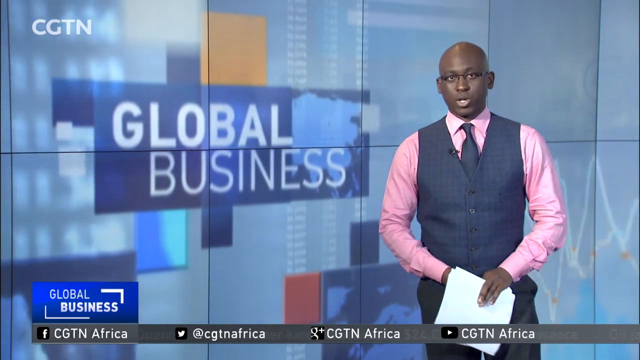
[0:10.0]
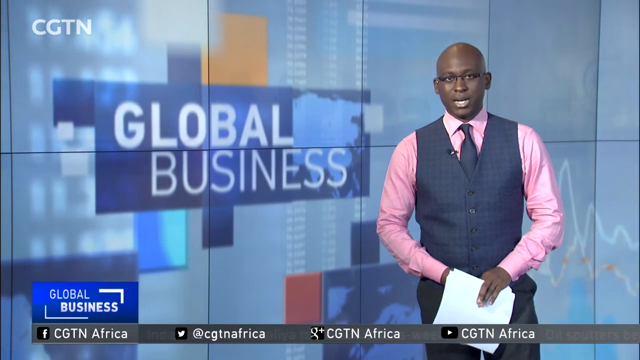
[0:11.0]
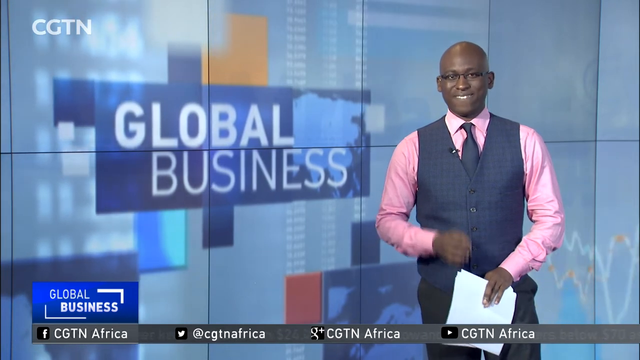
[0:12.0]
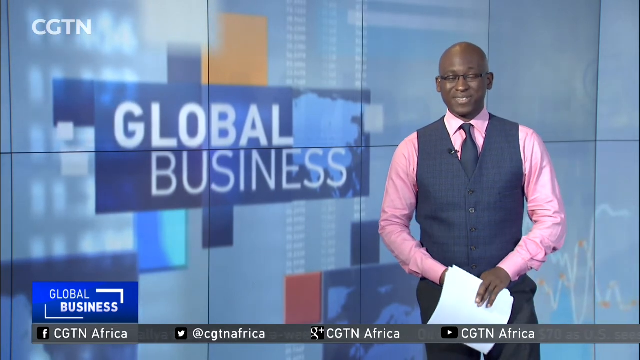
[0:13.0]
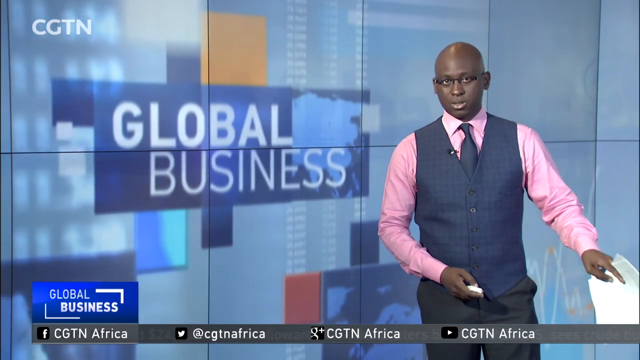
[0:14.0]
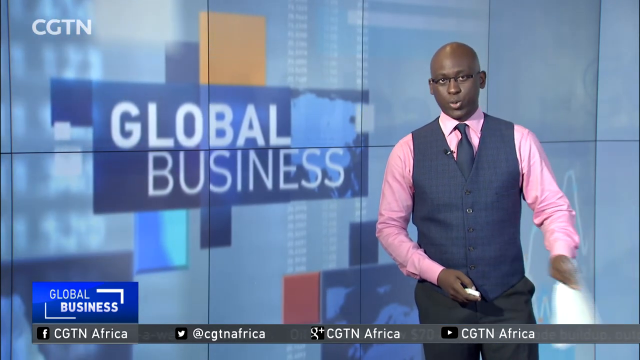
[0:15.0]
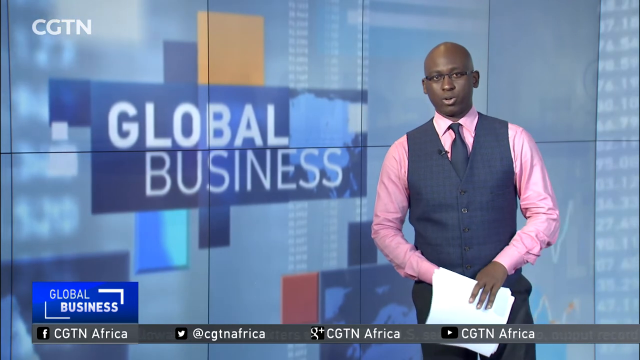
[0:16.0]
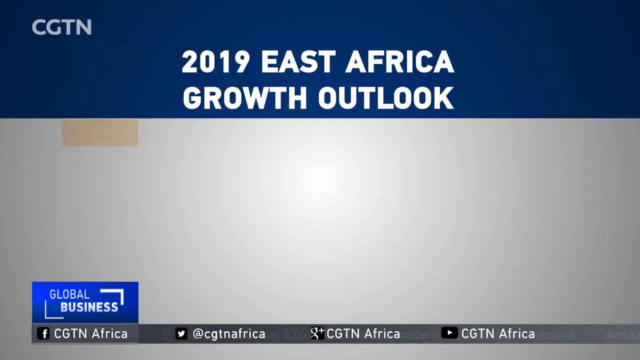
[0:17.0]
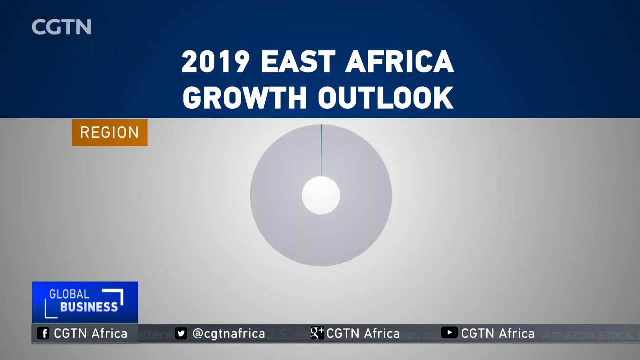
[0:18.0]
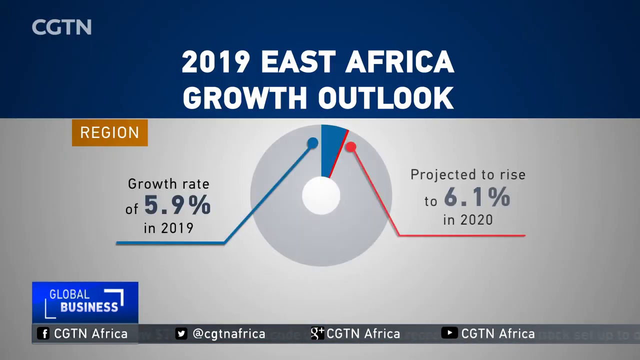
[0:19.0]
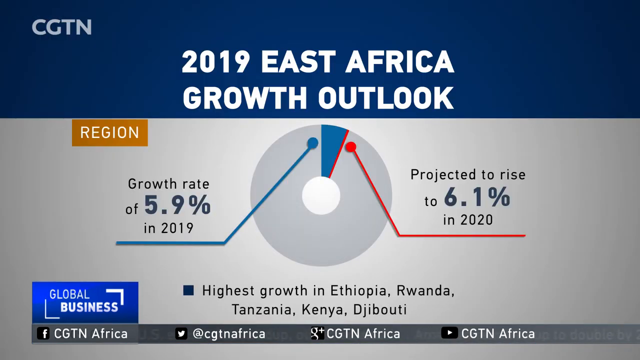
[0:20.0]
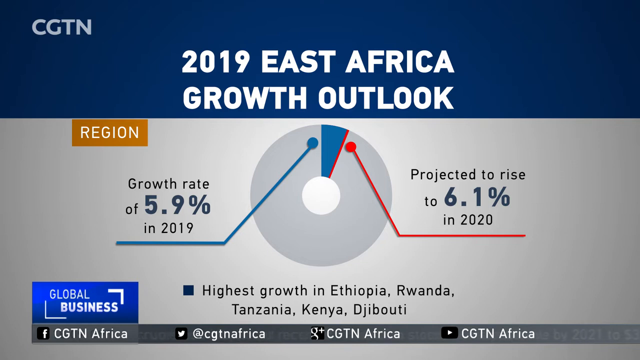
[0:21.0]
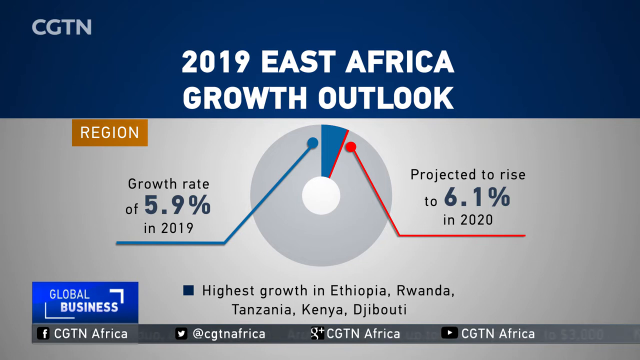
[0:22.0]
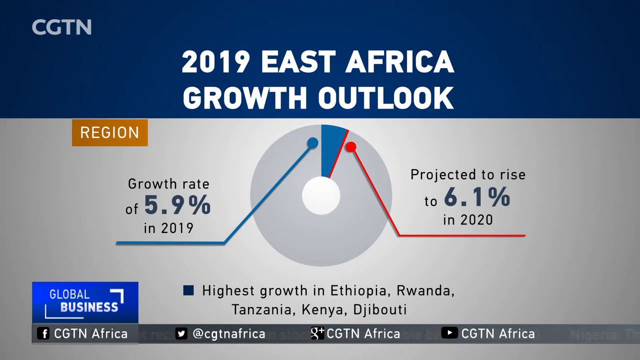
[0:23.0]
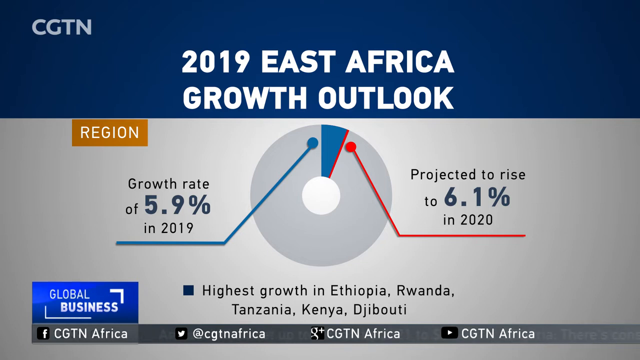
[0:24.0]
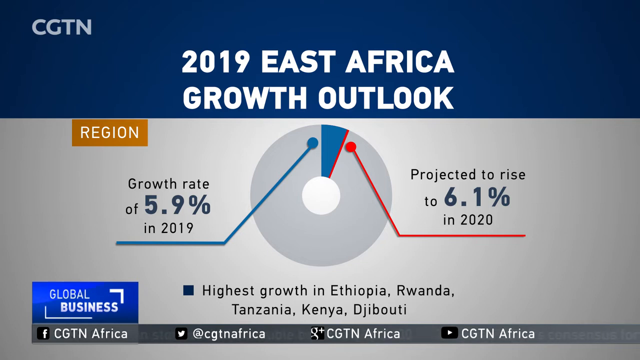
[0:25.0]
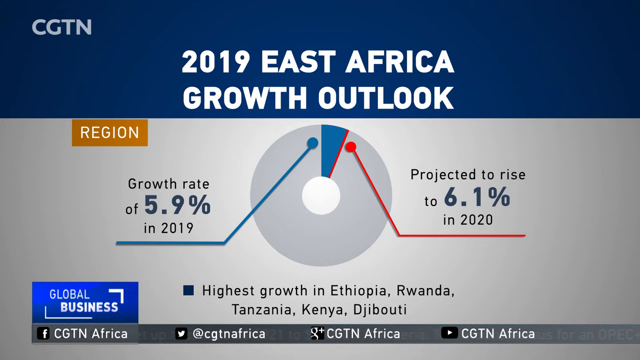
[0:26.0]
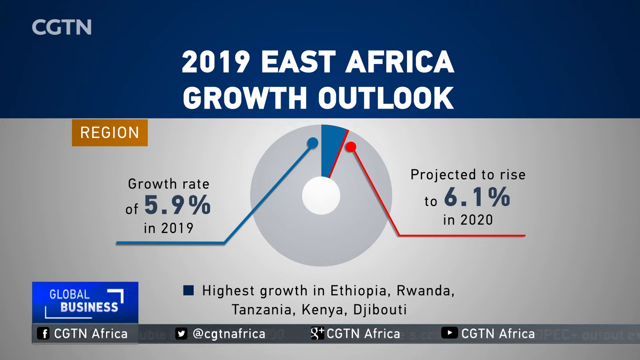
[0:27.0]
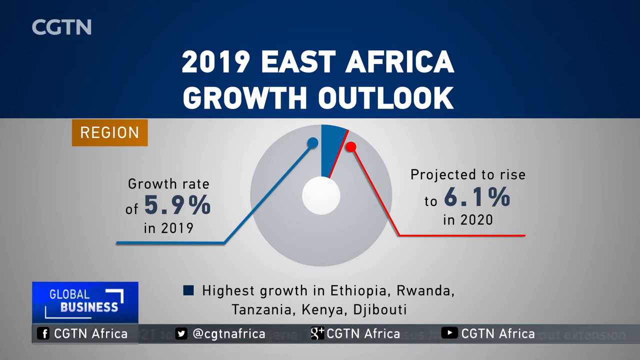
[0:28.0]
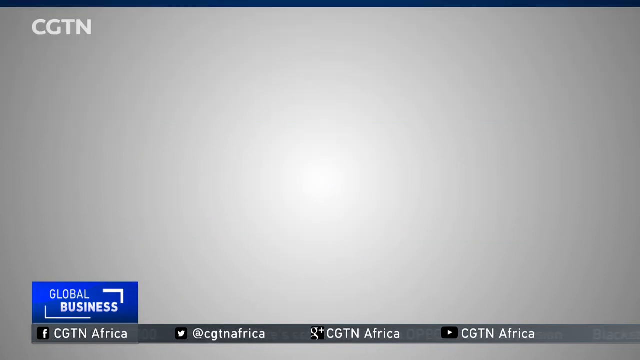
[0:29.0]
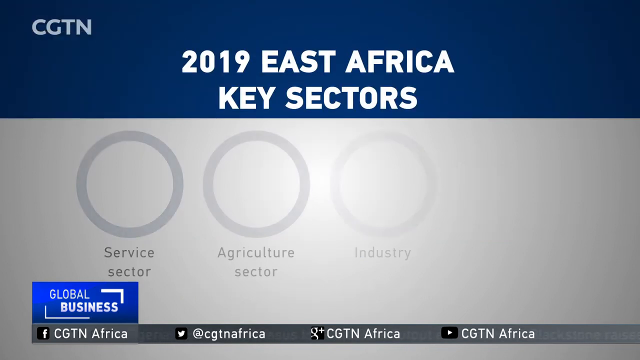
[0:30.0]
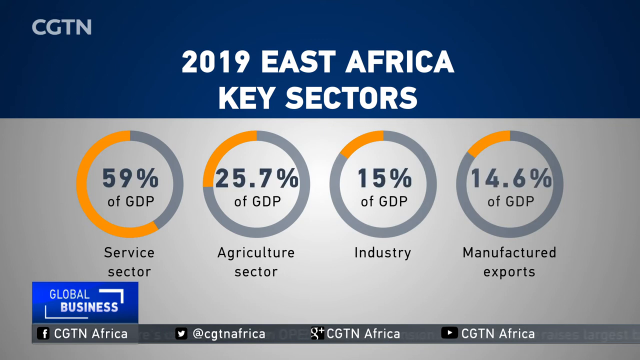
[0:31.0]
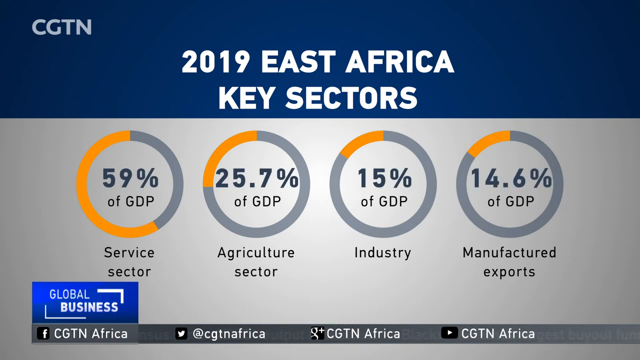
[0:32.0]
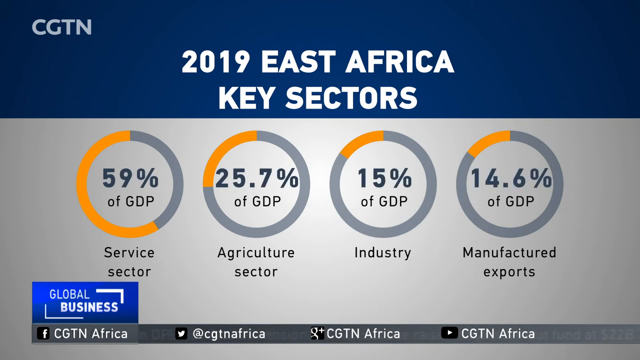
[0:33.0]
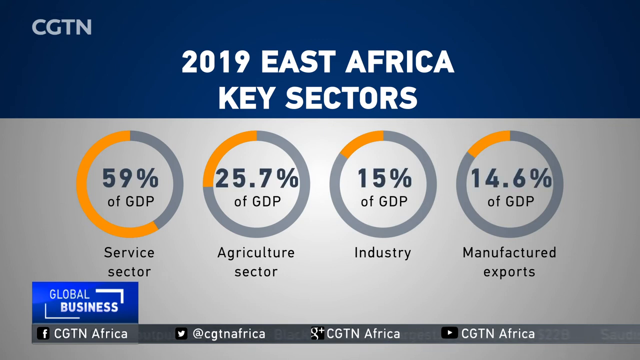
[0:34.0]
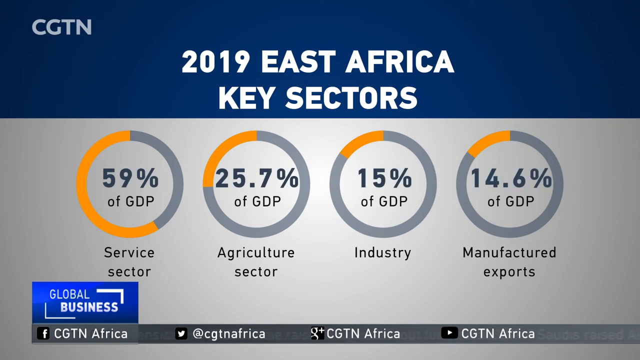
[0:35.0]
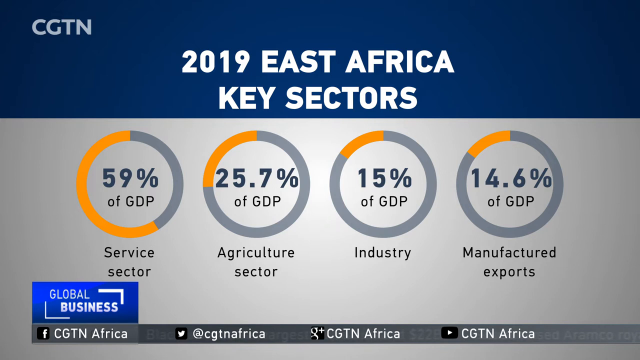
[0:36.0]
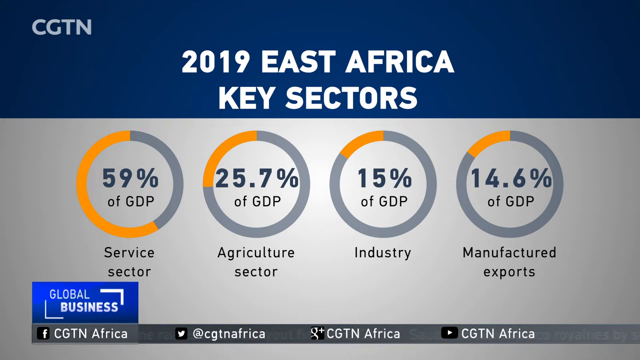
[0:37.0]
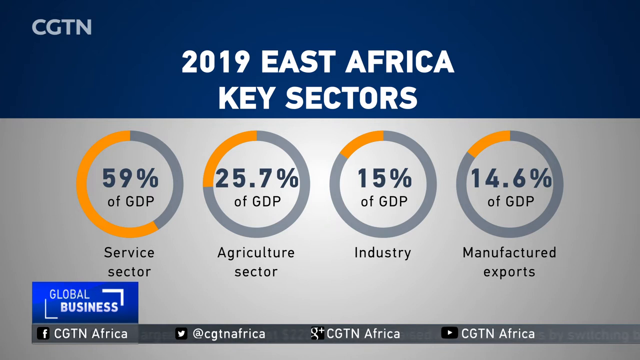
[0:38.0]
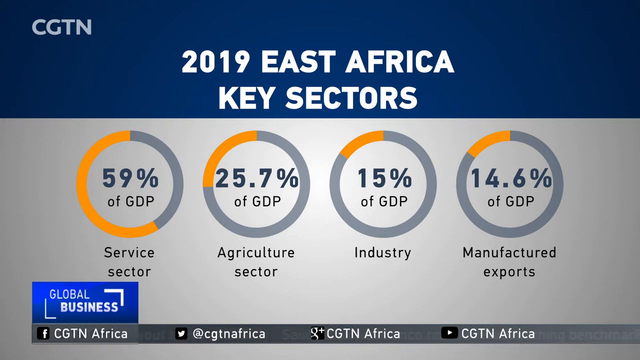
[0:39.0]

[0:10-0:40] The background behind the presenter is dynamic, with lines that look like graphs and more skyscrapers appearing. He becomes more animated: his left hand moves quickly out away from his body, almost as if throwing something, and his right hand can now be seen holding an item. He brings his hands back together and the screen changes to one titled "2019 East Africa Growth Outlook." It shows the highest growth predicted in Ethiopia, Rwanda, Tanzania, Kenya and Djibouti, with the growth rate expected to rise by 5.9% in 2019 and 6.1% in 2020. This is displayed on a circle, where the entire circle represents 100% and sections show the percentages. The screen stays up for quite a while, and "CGTN Africa" is visible. It then disappears and four circles appear showing the East Africa key sectors: service, agriculture, industry and manufacturing. Each is a gray circle, like a tire, with the percentage of GDP shown inside, and an orange marker on each circle indicates the percentage.